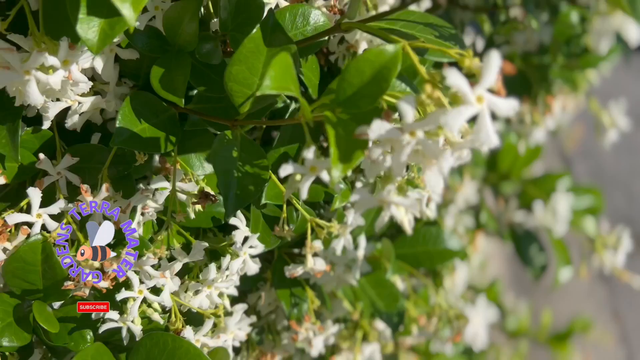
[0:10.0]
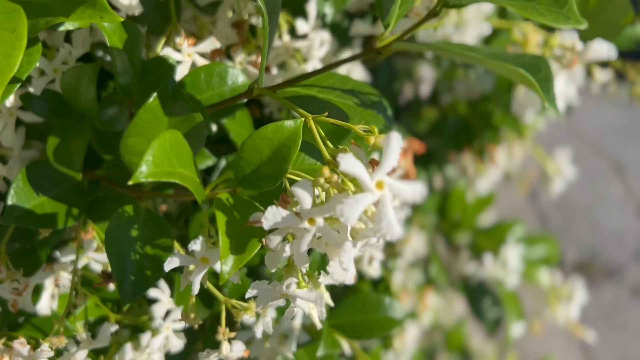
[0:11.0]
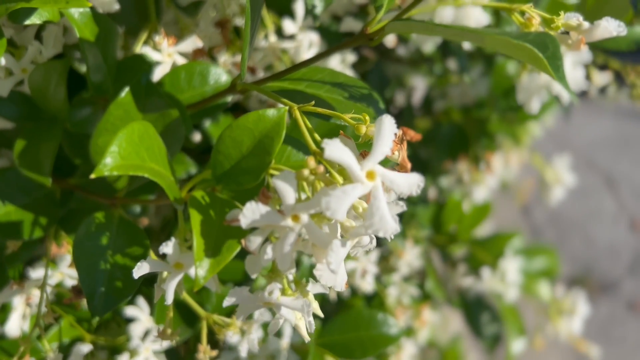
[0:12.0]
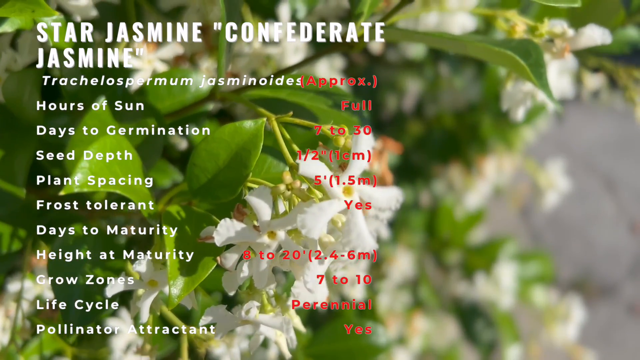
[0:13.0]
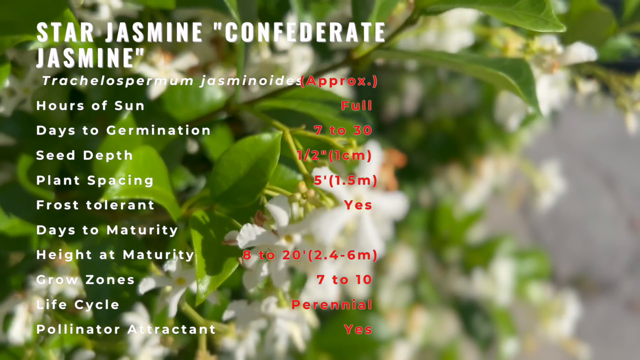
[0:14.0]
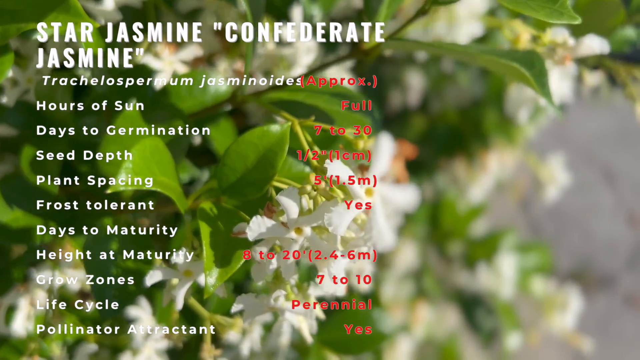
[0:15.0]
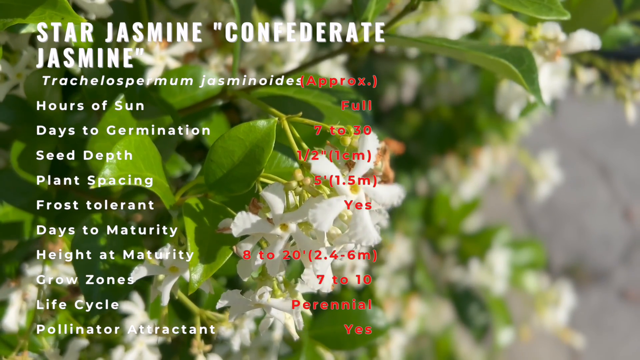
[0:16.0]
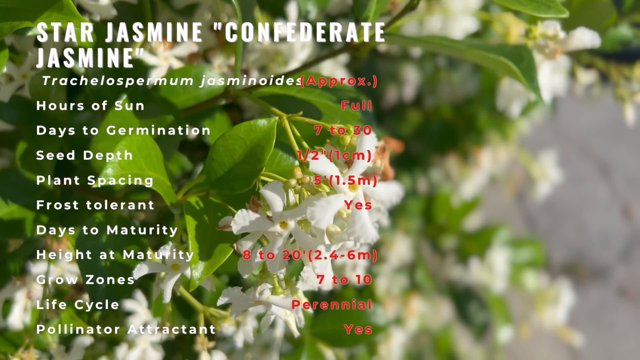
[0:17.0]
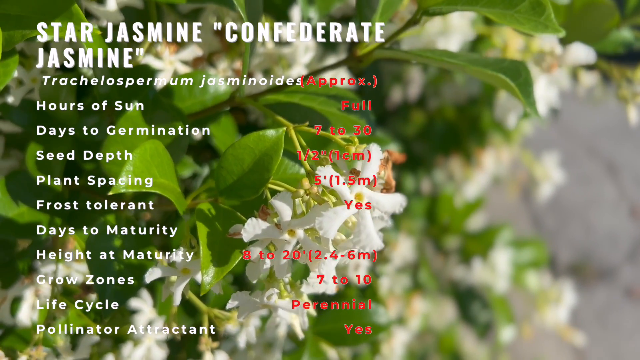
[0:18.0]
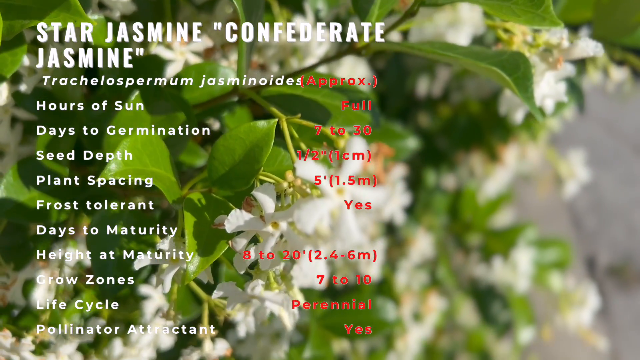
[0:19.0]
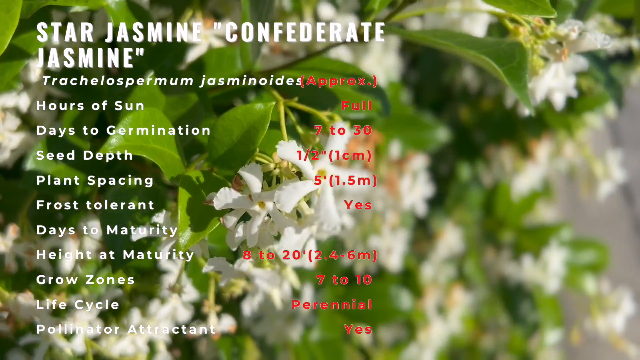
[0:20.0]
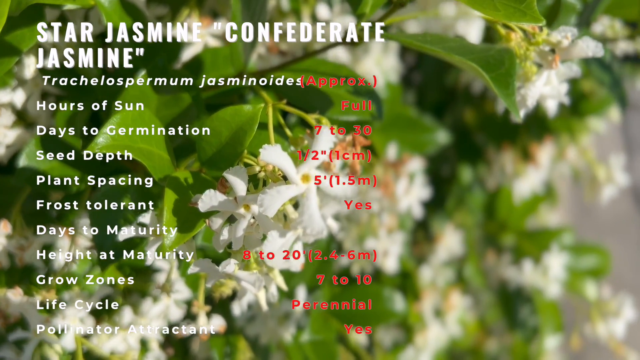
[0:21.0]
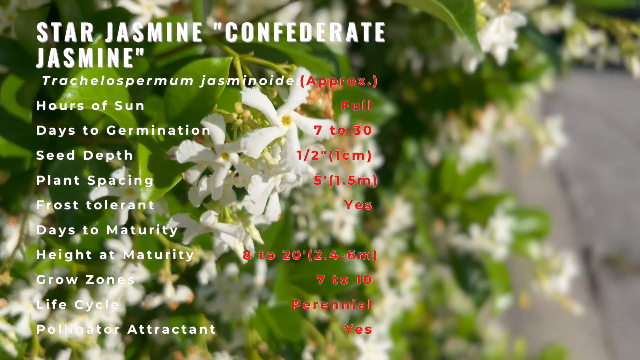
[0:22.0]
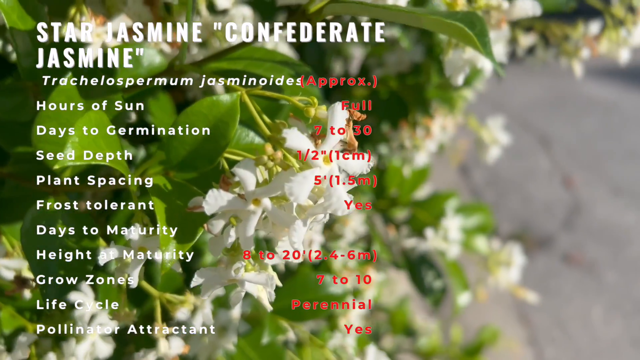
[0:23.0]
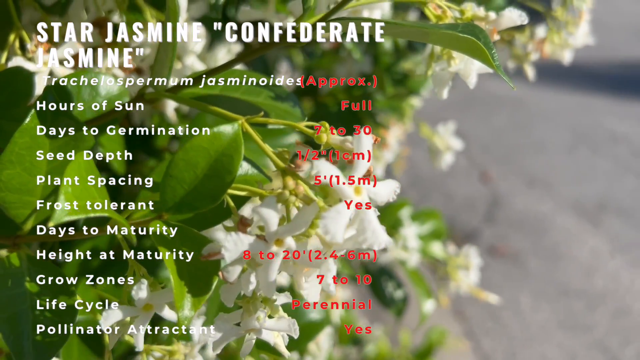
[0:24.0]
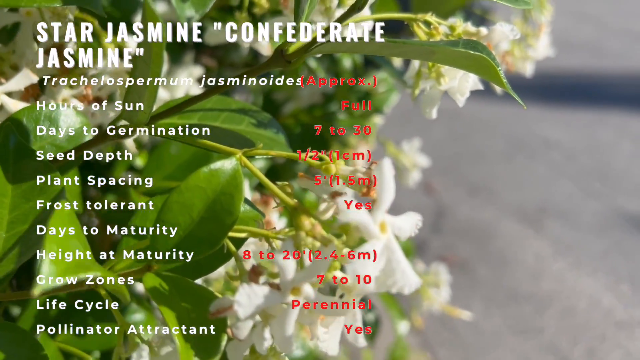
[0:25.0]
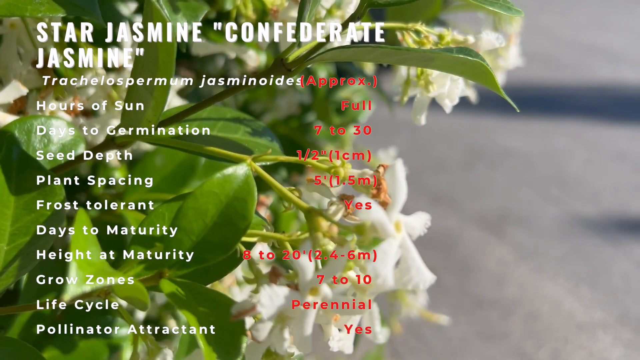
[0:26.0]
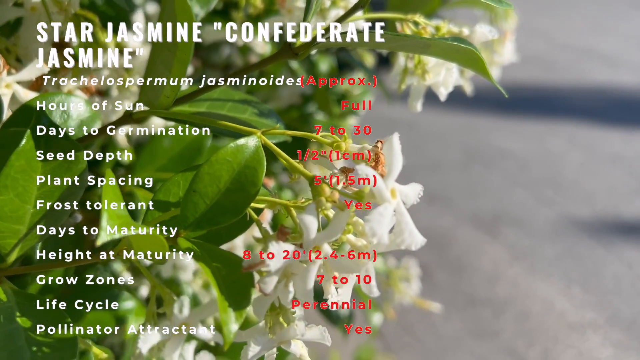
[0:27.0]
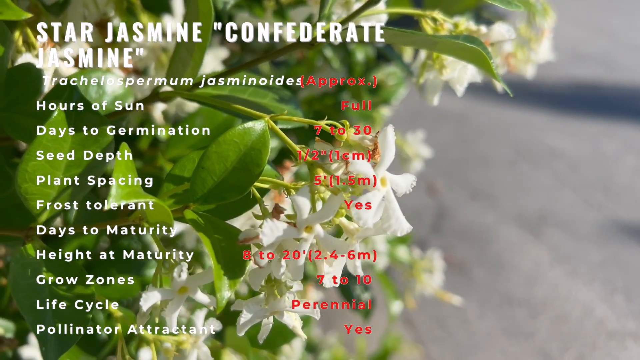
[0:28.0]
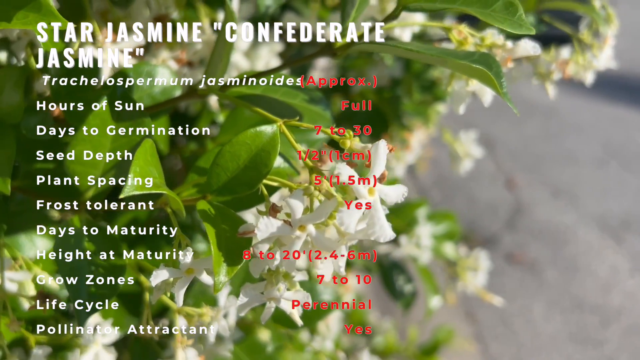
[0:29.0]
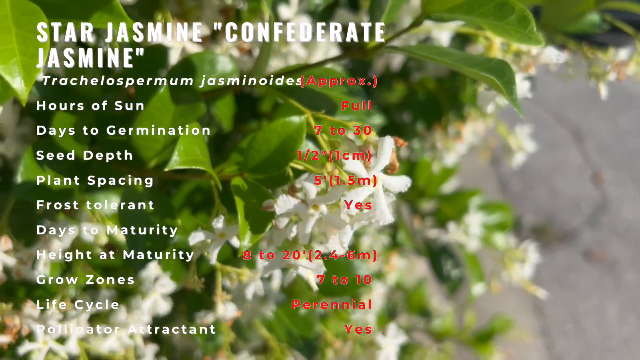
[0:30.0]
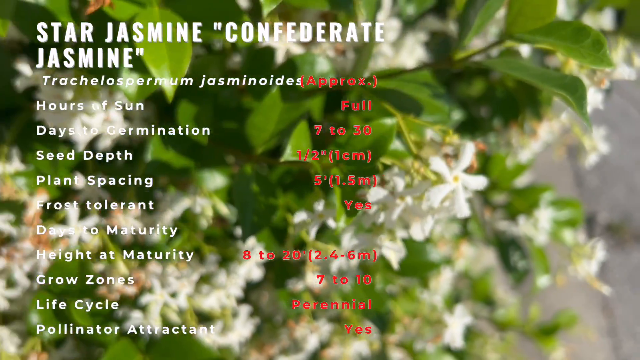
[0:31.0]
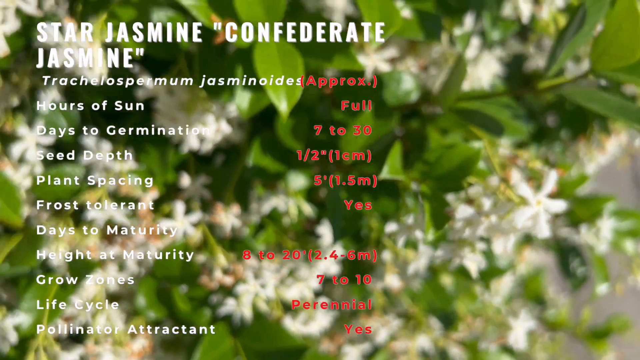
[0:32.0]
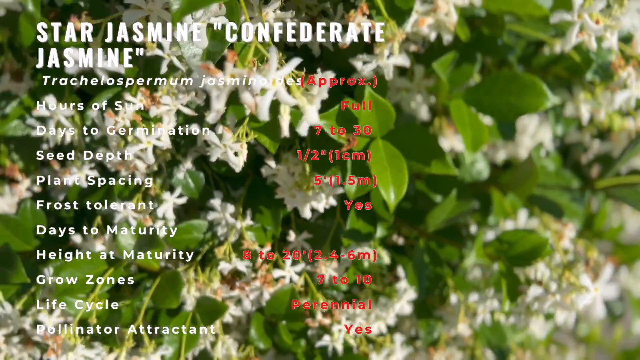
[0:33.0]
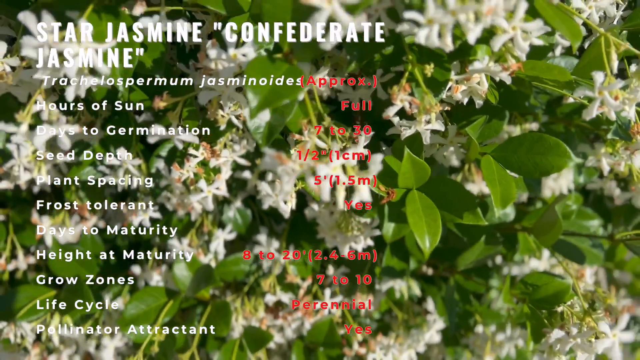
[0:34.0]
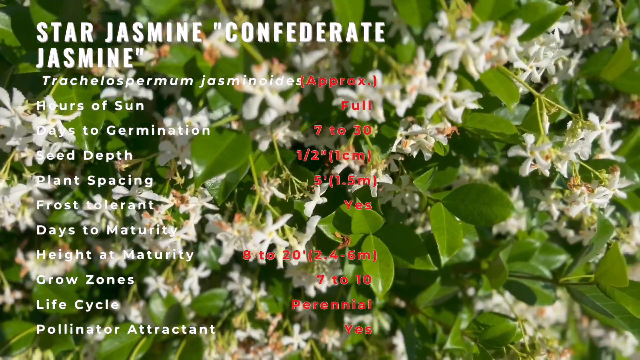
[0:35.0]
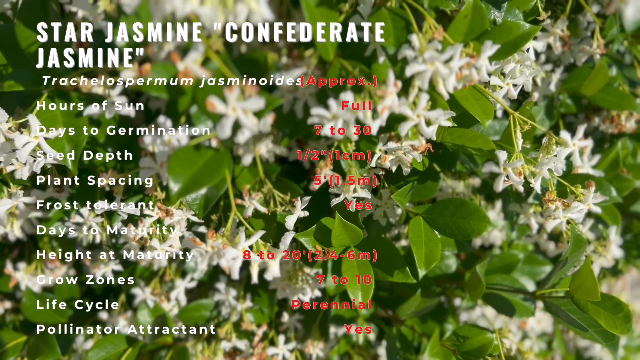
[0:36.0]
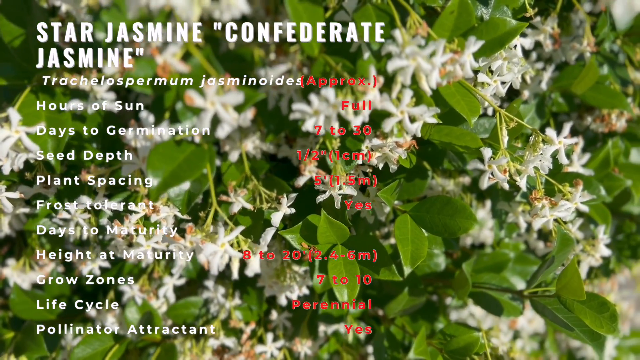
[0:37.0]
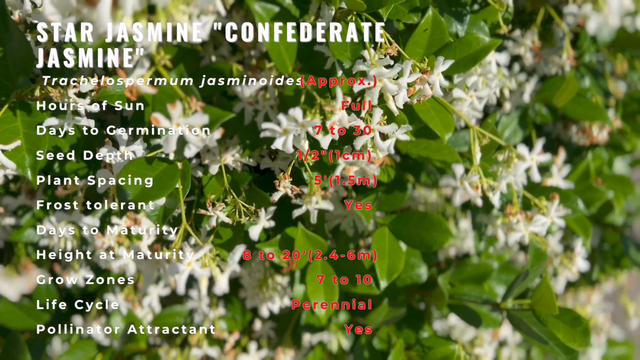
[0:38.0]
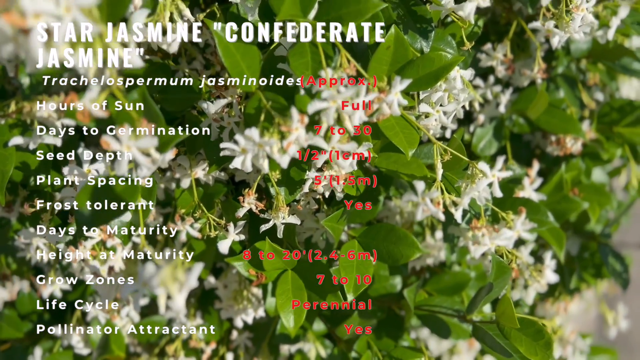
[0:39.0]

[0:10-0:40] The bee-like logo appears, and then words pop up. White text reads "star jasmine confederate jasmine", along with what seems to be its scientific name. Text about sunlight follows, with "full" in red. White text reads "days to germination" with "1 to 30". The seed depth value is hard to read, maybe 11 kilometers, because the red text fades out and the green of the plant makes it harder to see. The text also reads "force tolerant" "yes" and "height at maturity" "8 to 20 inches", and the grow zones look like they could be 2, 7 or 10.